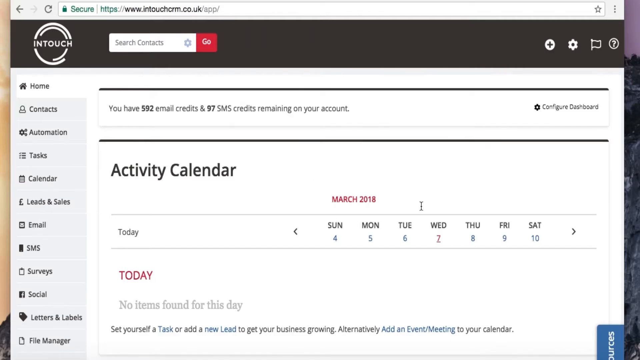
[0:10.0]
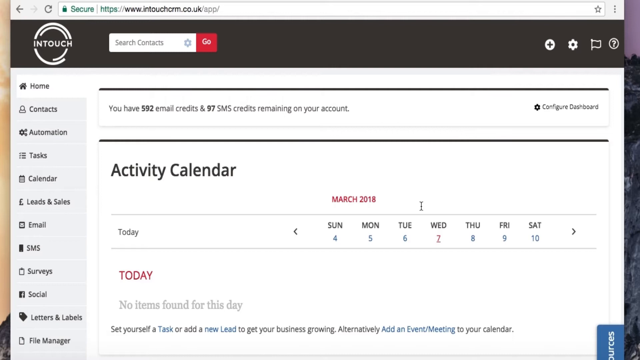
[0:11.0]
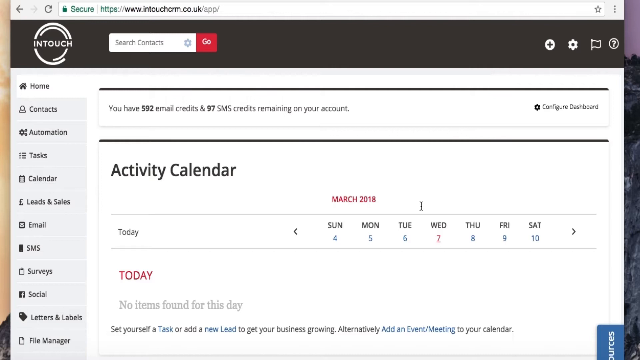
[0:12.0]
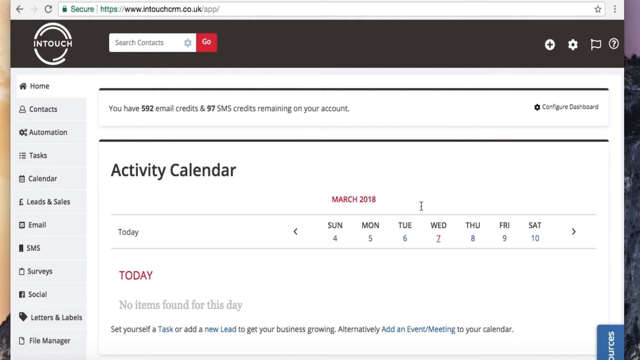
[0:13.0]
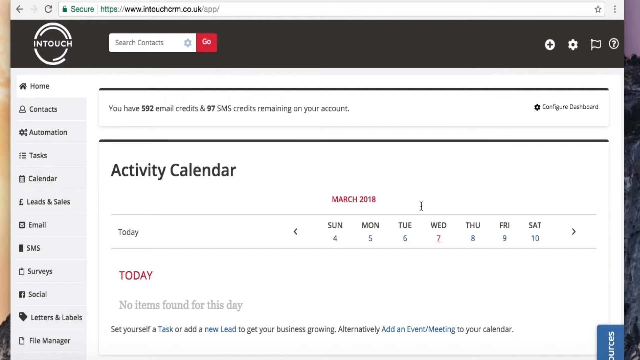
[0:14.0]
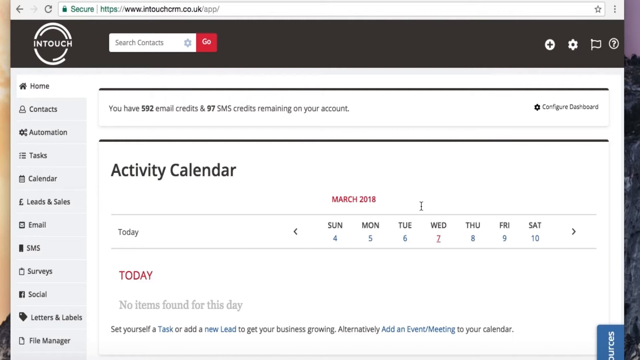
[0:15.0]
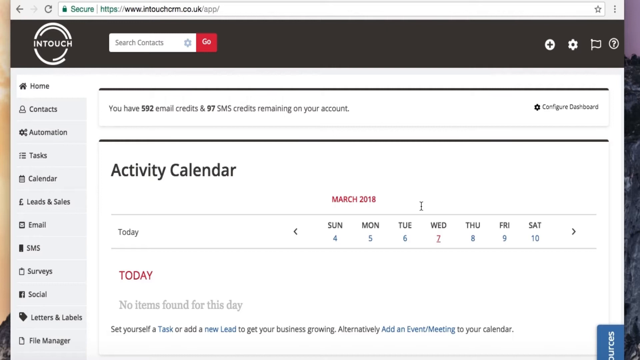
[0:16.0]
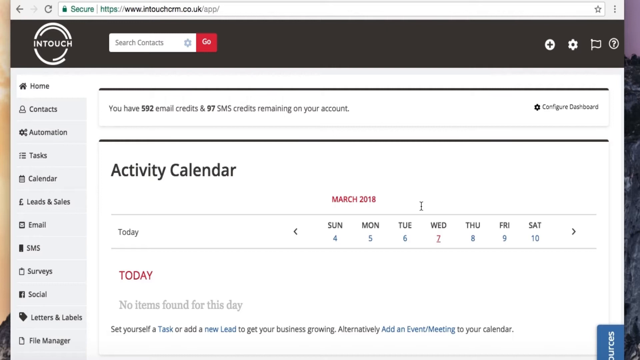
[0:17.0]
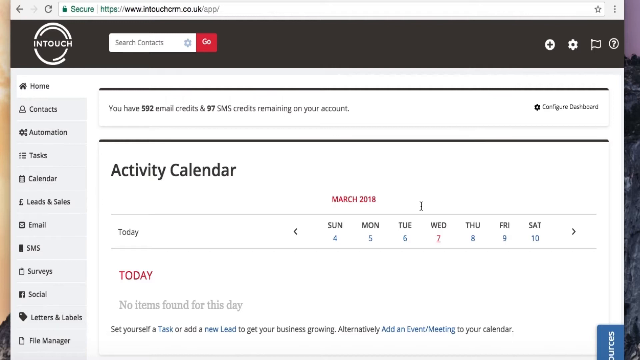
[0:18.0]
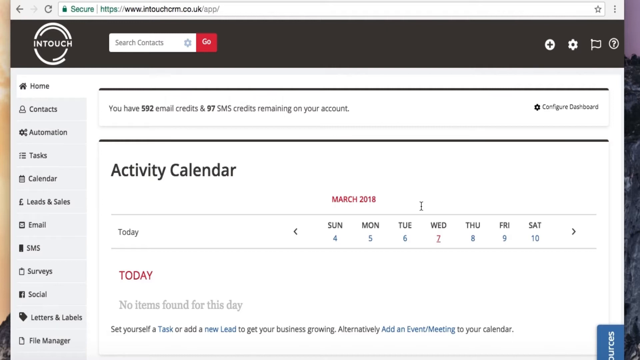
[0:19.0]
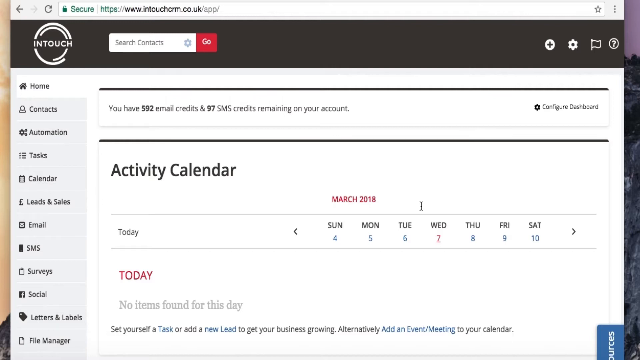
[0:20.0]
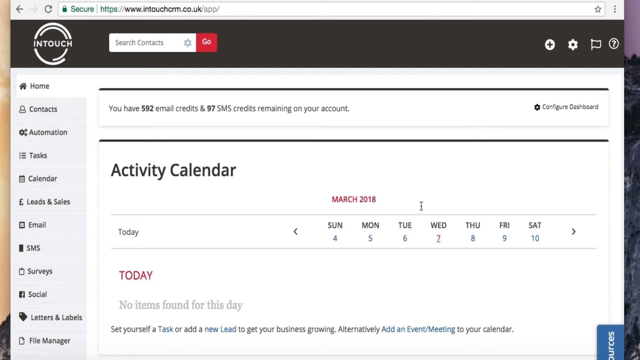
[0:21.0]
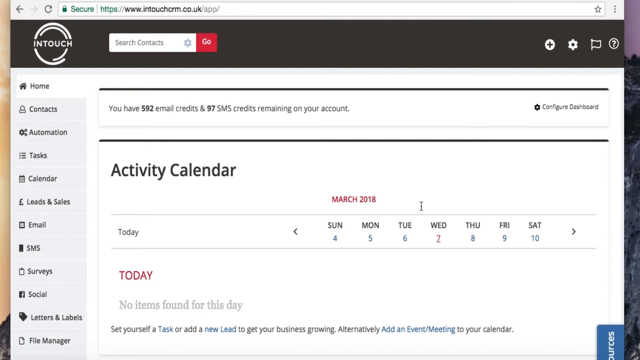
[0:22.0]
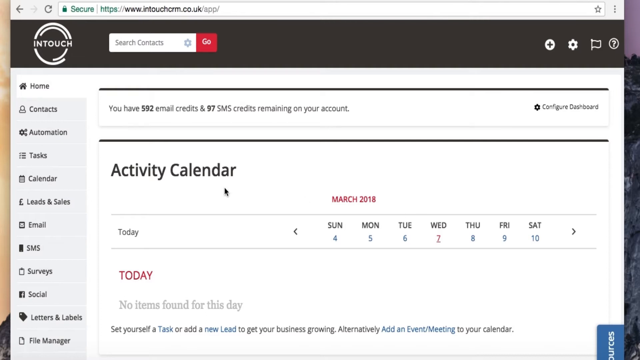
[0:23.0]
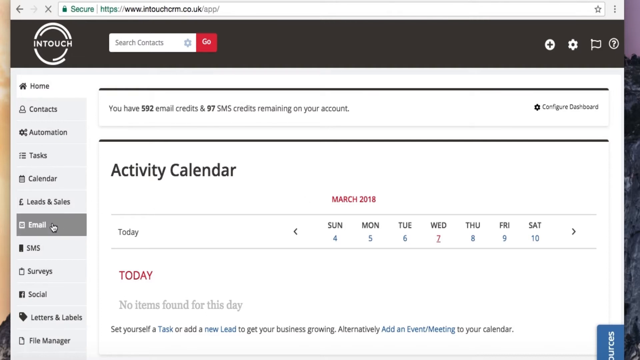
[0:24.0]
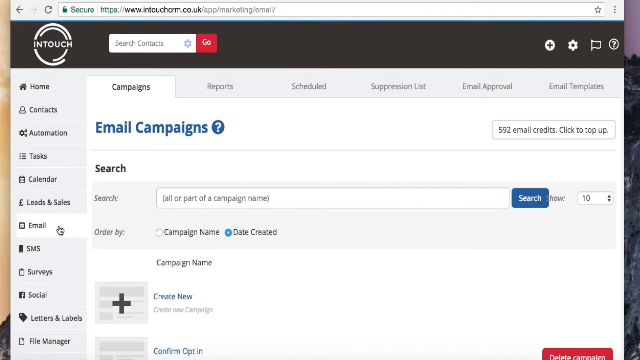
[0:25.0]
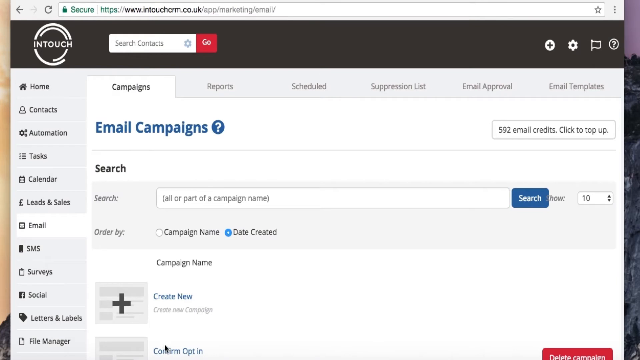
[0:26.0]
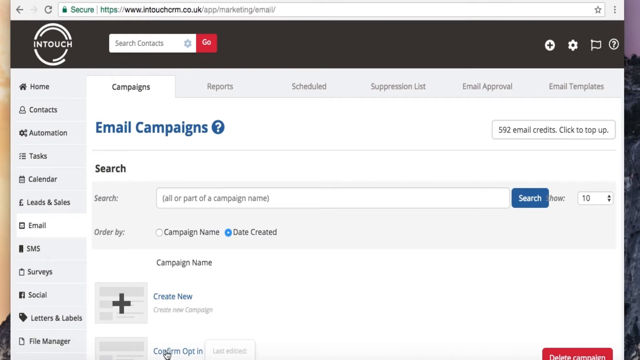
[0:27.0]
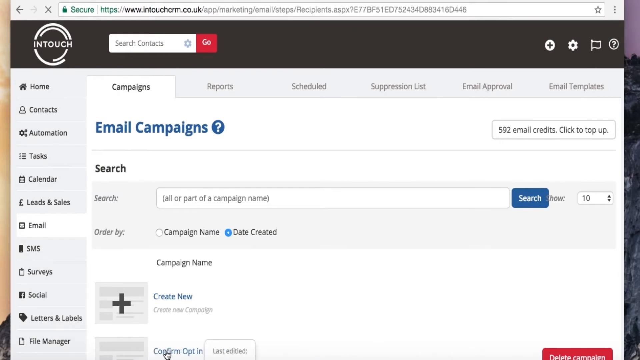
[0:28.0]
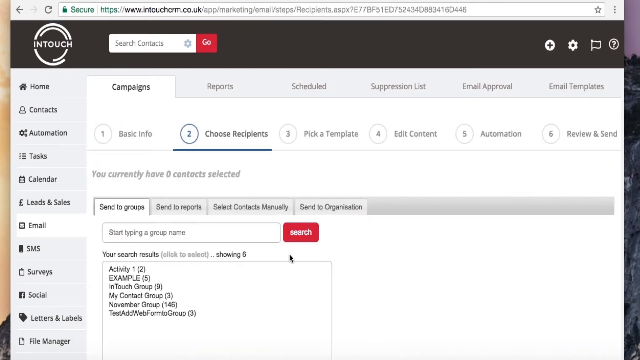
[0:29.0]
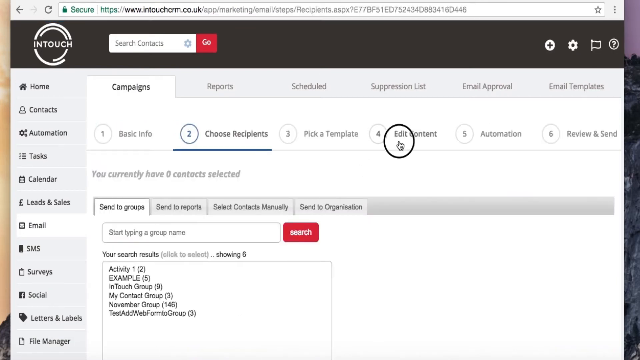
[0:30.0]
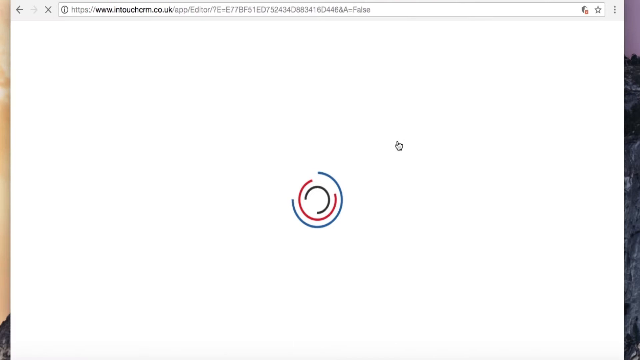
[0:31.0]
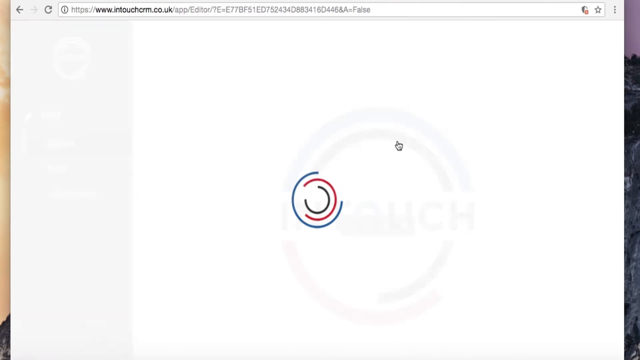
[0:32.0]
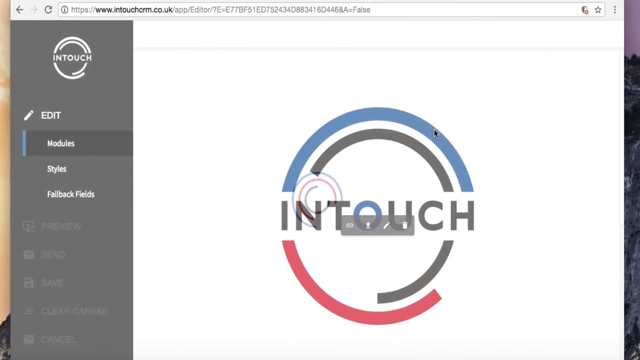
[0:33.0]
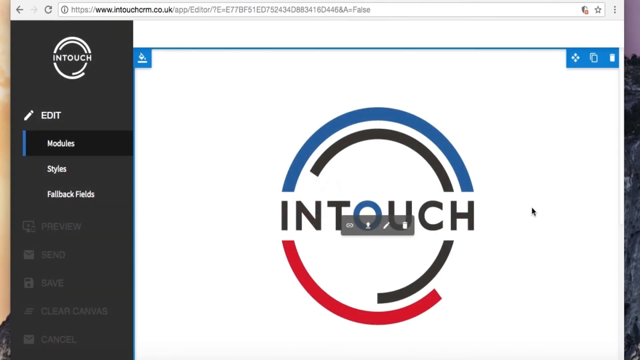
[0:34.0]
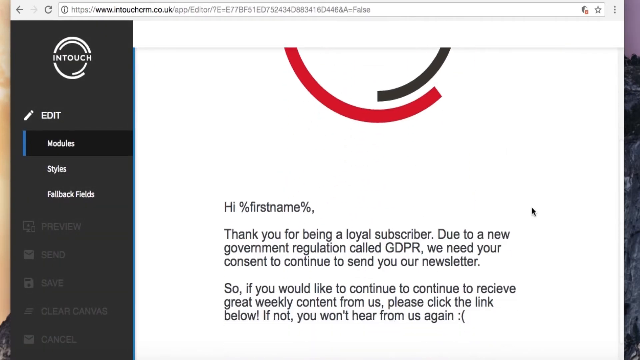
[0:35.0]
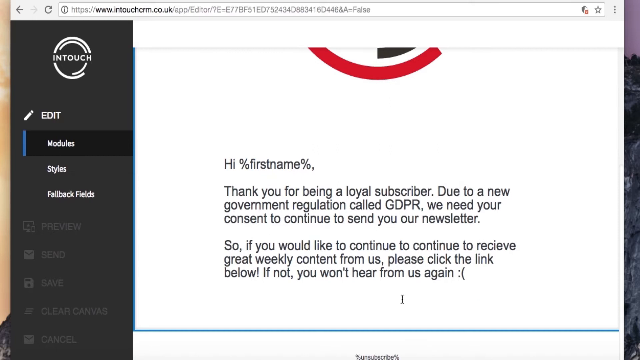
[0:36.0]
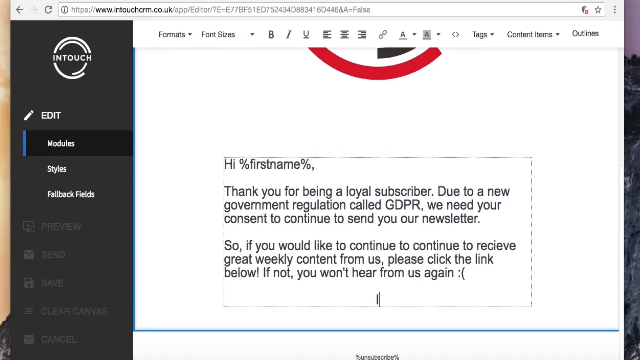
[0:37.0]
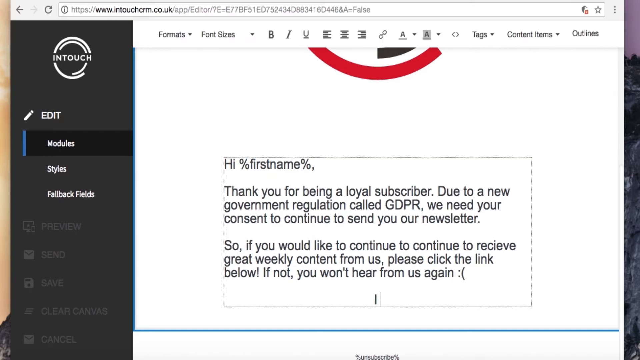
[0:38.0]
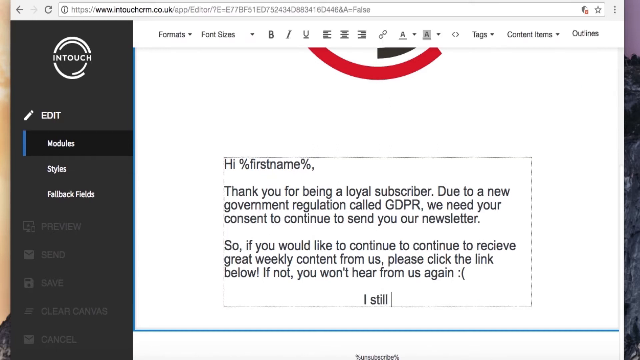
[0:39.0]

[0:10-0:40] The laptop screen is still shown. Down the left side are the links Home, Contacts, Automation, Tasks, Calendar, Leads and Sales, Emails, SMS, Survey, Social, Letters and Labels, and File Manager. At the top to the right of them, text says "you have 592 email credits and 97 SMS credits remaining on your account." On the right side is a settings icon labeled "configure dashboard." Below that is a black line; on the left it says "activity calendar," in the center in red it says "March 2018," and below that is "today." Next come Sunday, Monday, Tuesday, Wednesday, Thursday, Friday and Saturday, with the numbers four through ten below them, and below that "today" in red. The cursor goes over and clicks on Email, which opens the email section with six clickable links across the top; the one selected is campaigns, and below it blue text says "email campaigns." There is a search bar and choices such as "order by." A button is clicked that leads to a different part of the section, then edit content is clicked, and a page loads showing the edit page. On its right side is a white background with the InTouch logo: a black line comes from above the end and goes through the CH about midway down, a blue line goes over the top, and a red one comes about three quarters of the way over at the bottom. There are tabs down the right side. The page is scrolled down, a little square with words in it is clicked, and typing begins.